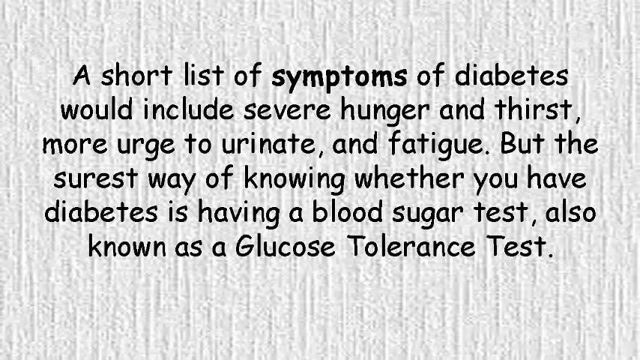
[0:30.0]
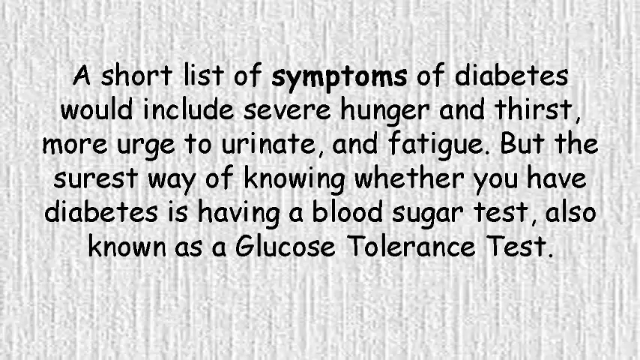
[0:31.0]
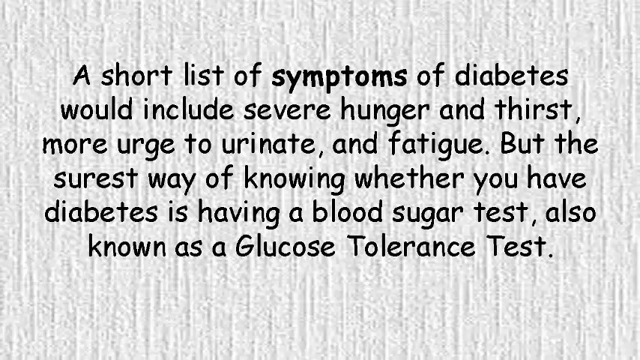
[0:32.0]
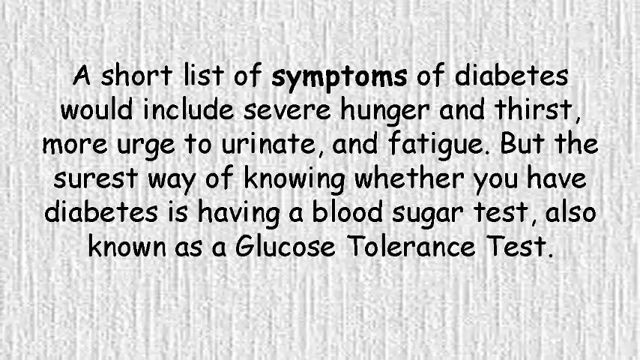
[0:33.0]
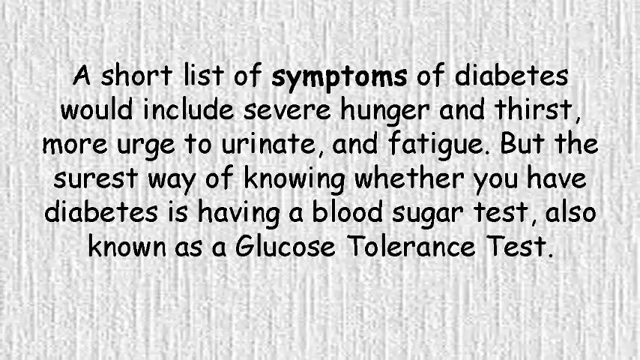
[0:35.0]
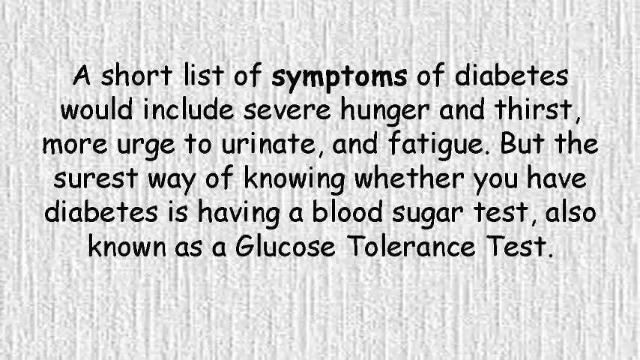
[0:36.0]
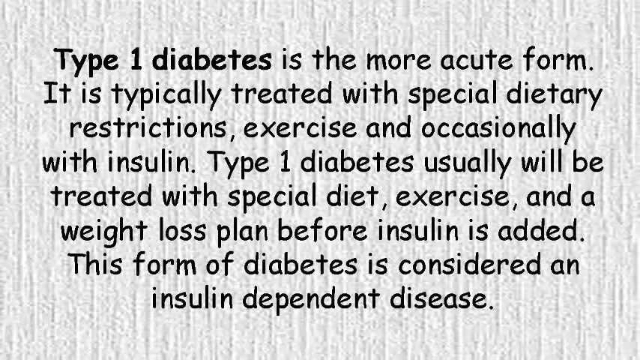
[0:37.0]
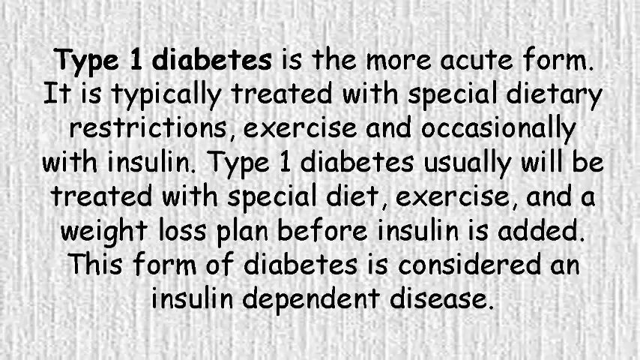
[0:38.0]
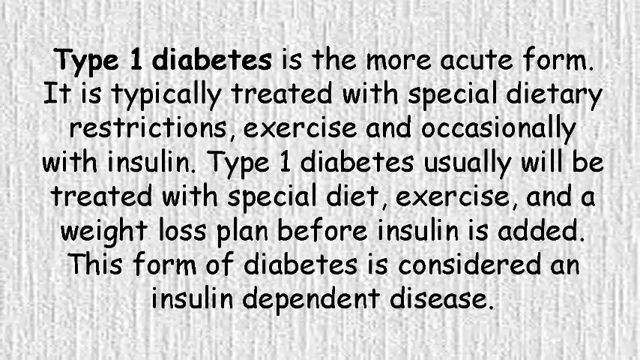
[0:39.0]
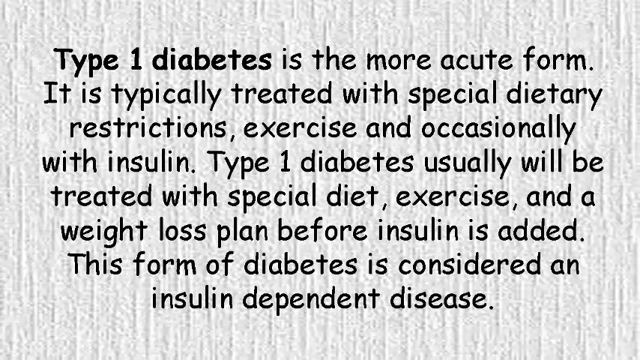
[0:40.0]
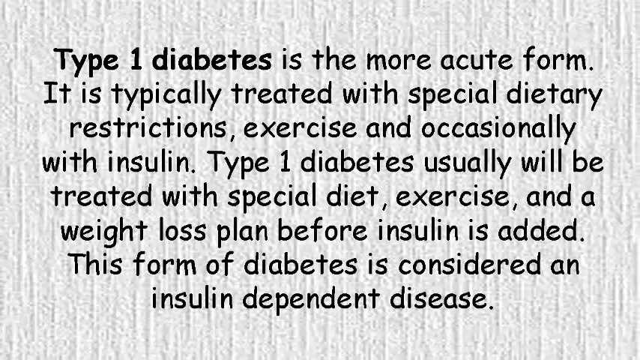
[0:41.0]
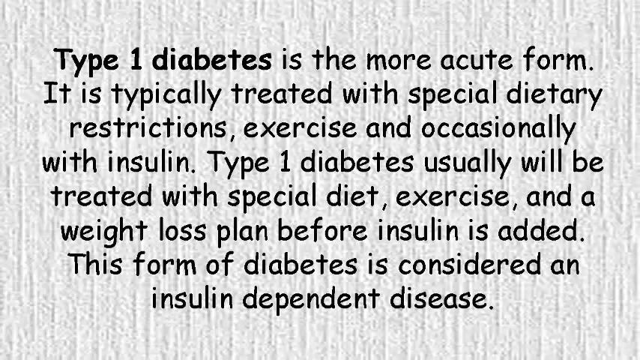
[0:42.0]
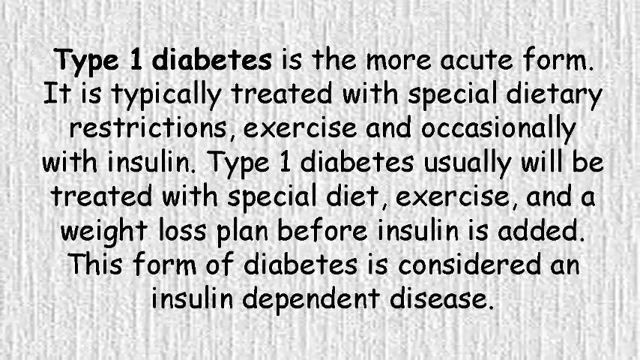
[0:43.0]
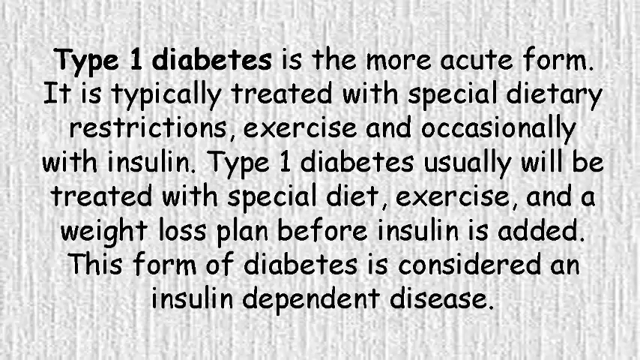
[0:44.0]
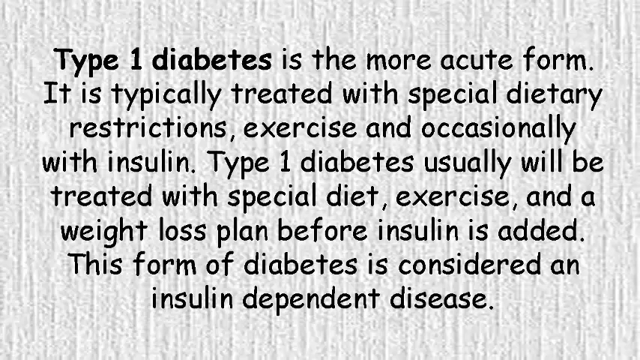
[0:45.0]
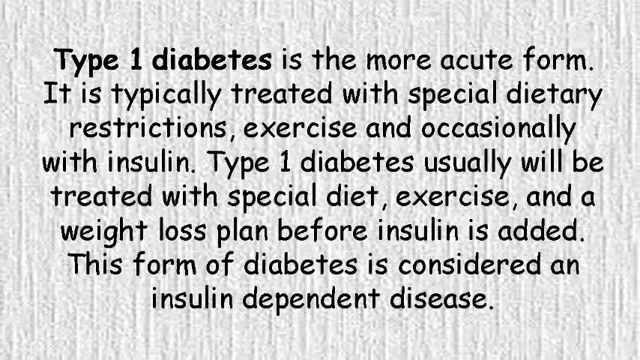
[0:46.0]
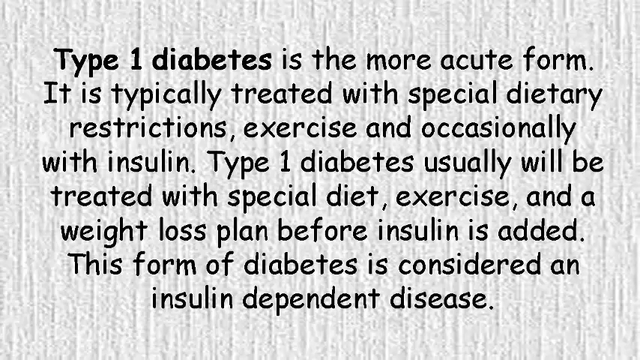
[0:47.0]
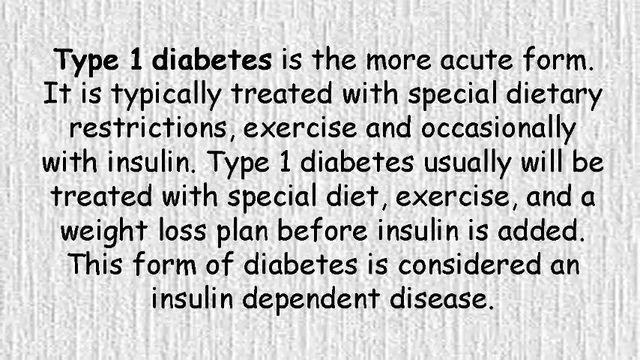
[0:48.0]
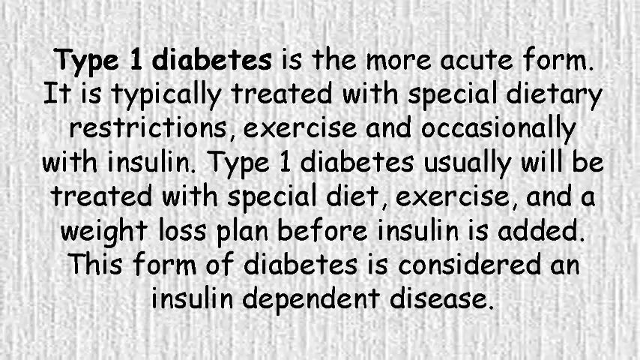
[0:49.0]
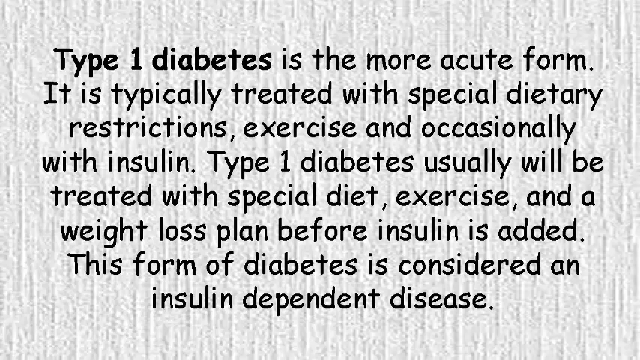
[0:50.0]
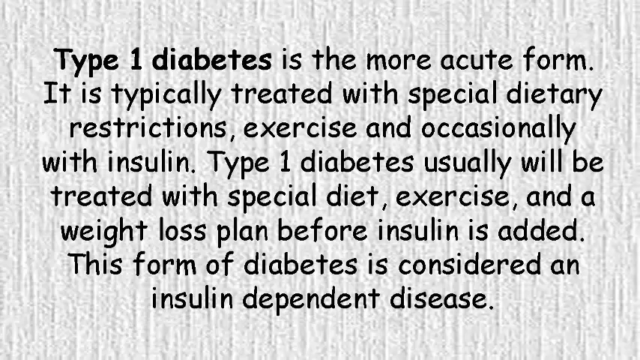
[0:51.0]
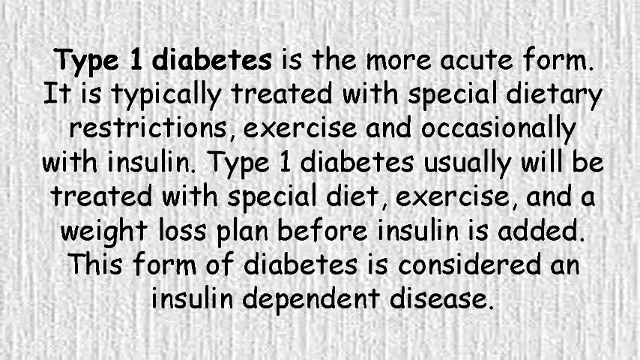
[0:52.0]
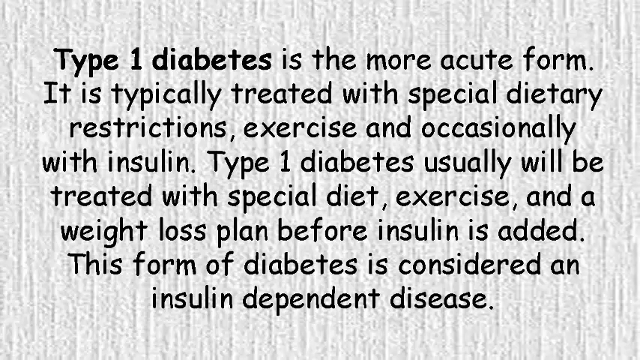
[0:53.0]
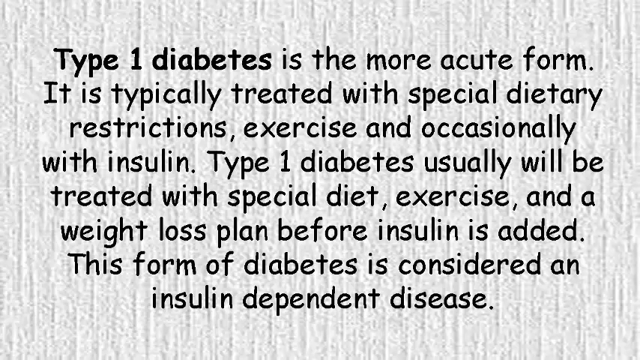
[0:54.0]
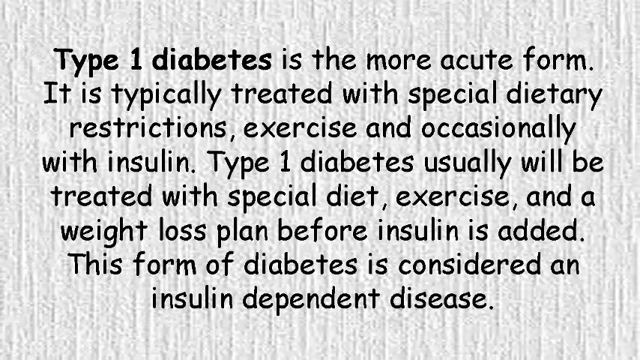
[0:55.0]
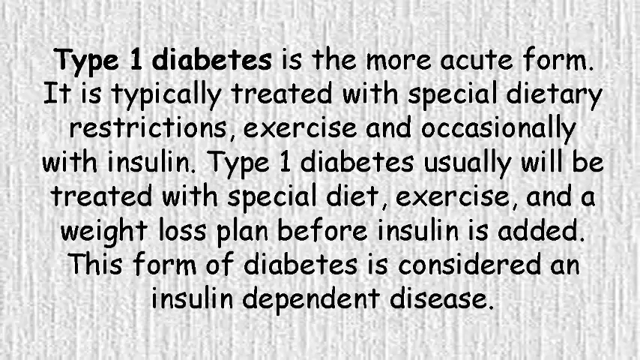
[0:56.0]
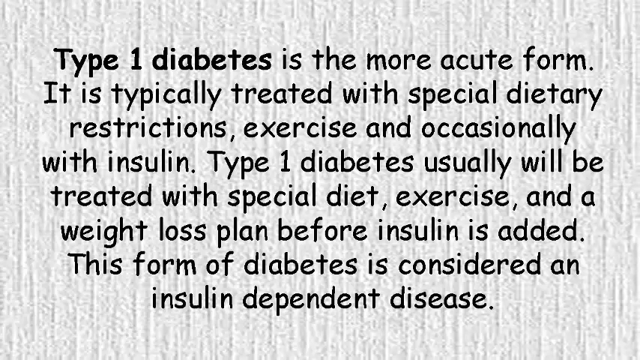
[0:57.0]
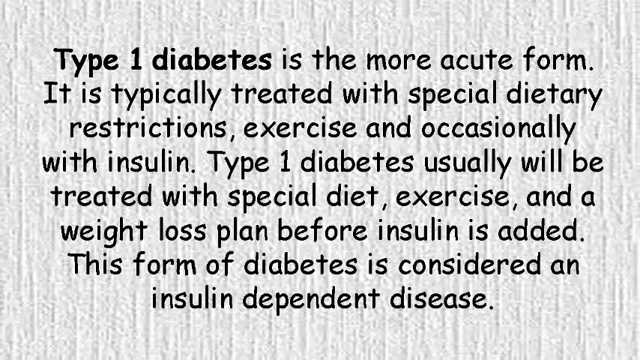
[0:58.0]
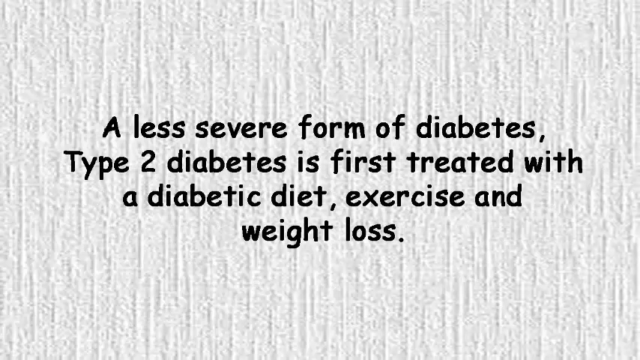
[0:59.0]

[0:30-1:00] A paragraph reads: "A short list of symptoms of diabetes would include severe hunger and thirst, more urge to urinate, and fatigue. The surest way of knowing whether you have diabetes is having a blood sugar test, also known as a glucose tolerance test." The word "symptoms" is in bold. The background is white but almost textured rather than plain. The paragraph stays on screen for a moment before switching to a new one: "Type 1 diabetes is the more acute form it is typically treated with special dietary restrictions exercise and occasionally with insulin type 1 diabetes usually will be treated with special diet exercise and a weight loss plan before insulin is added this form of diabetes is considered an insulin dependent disease." The words "type 1 diabetes" are in bold. This paragraph stays on screen for a few moments, then switches to one that reads: "A less severe form of diabetes, type 2 diabetes, is first treated with the diabetic diet, exercise, and weight loss."